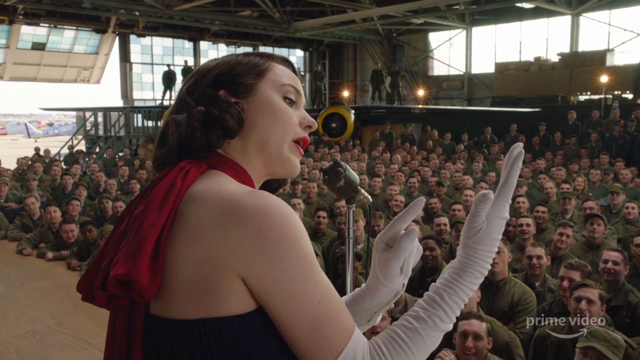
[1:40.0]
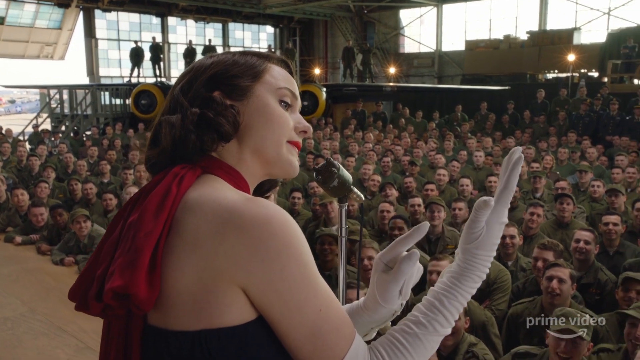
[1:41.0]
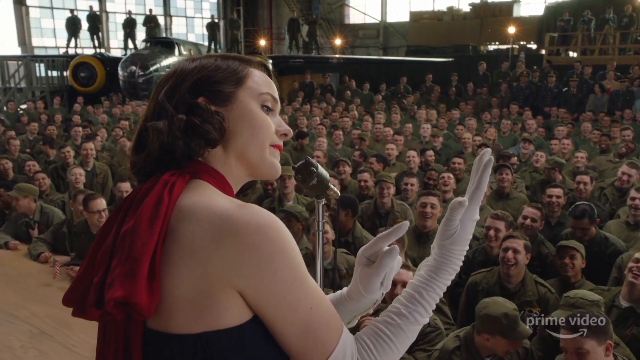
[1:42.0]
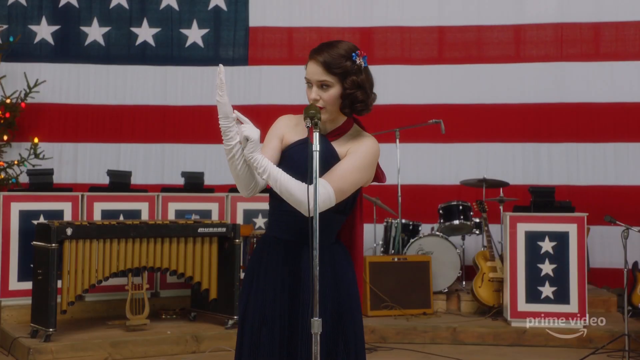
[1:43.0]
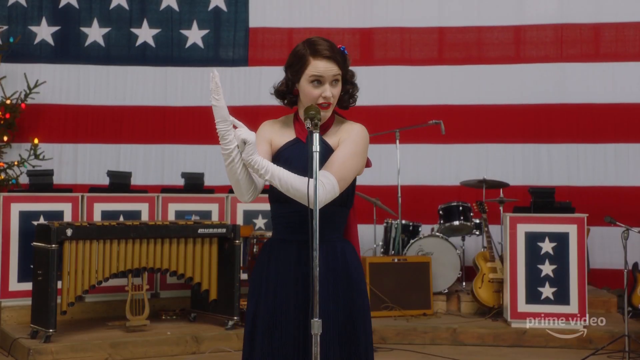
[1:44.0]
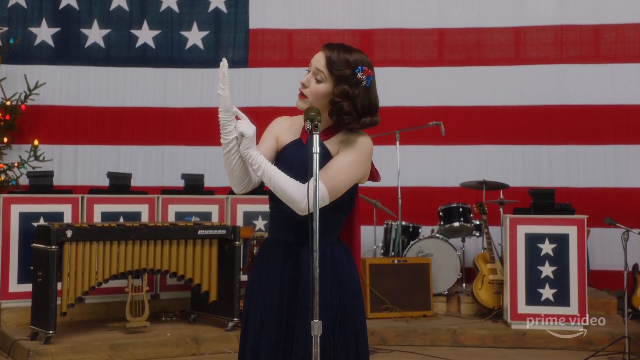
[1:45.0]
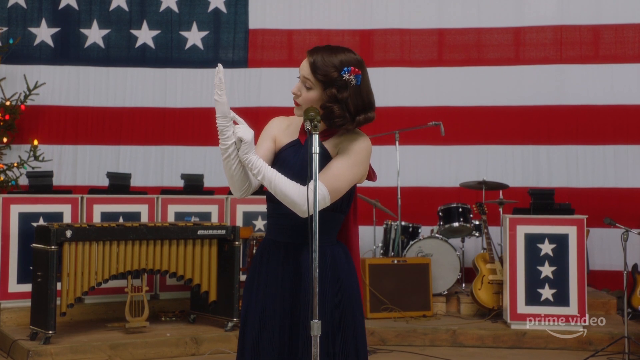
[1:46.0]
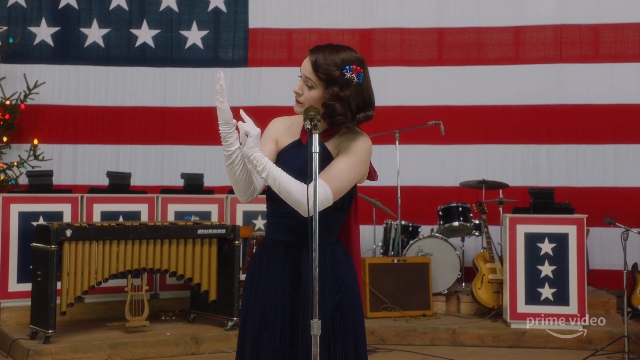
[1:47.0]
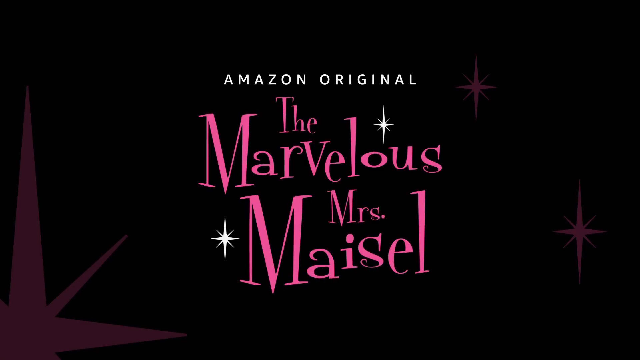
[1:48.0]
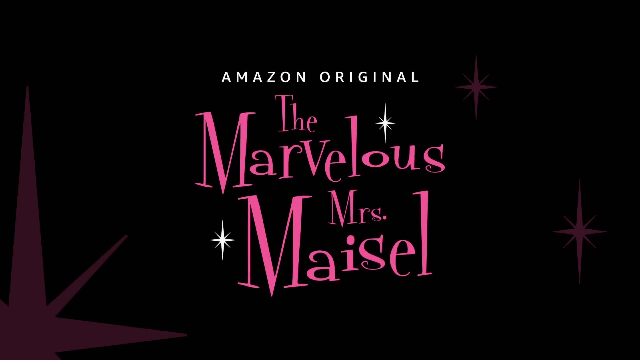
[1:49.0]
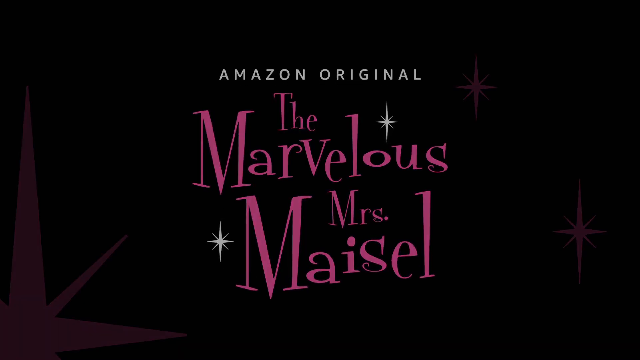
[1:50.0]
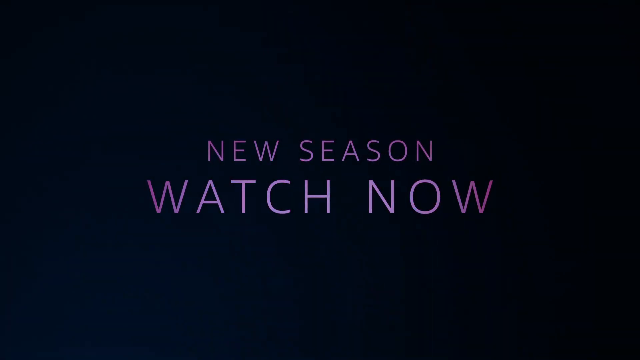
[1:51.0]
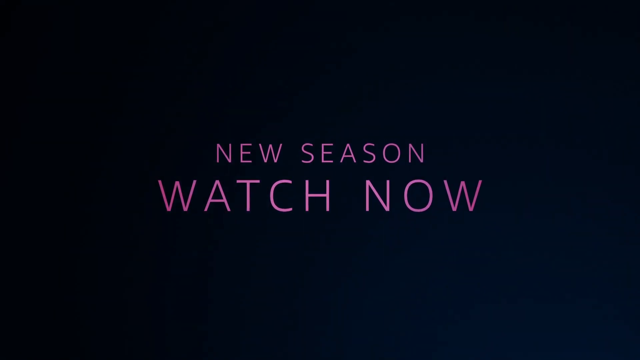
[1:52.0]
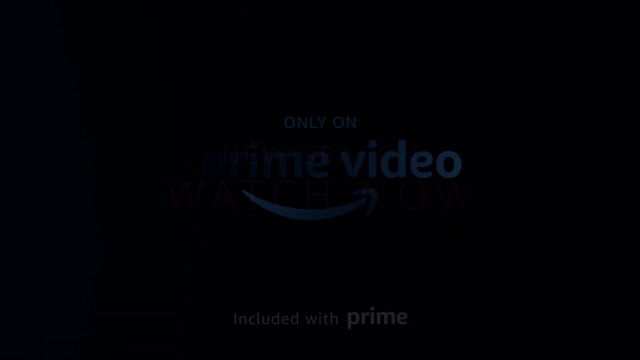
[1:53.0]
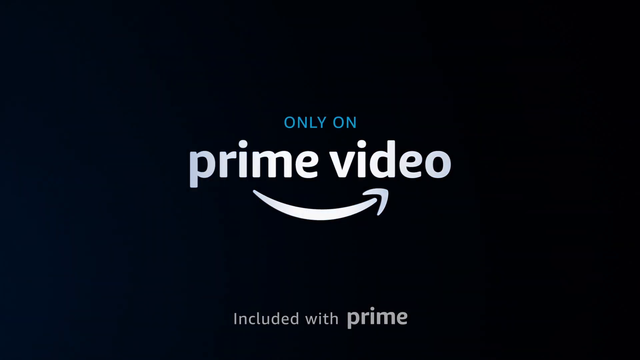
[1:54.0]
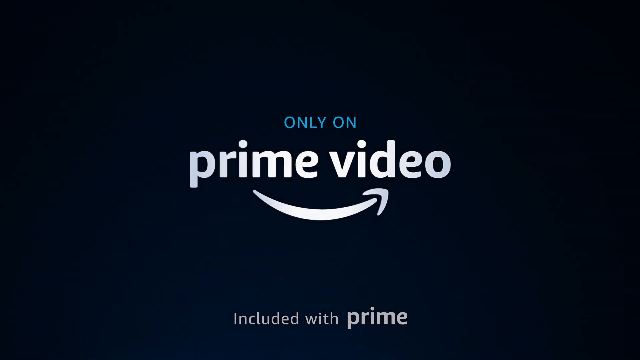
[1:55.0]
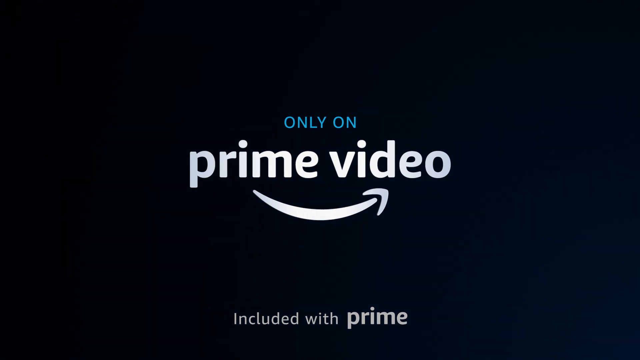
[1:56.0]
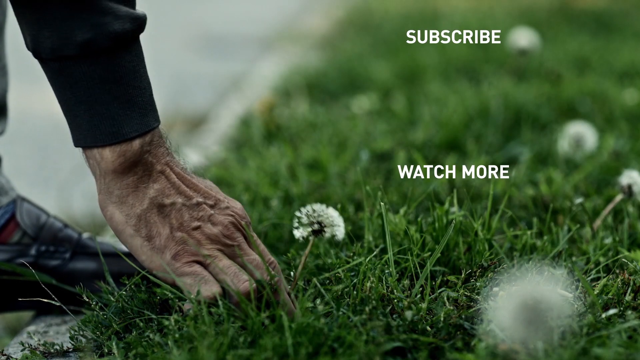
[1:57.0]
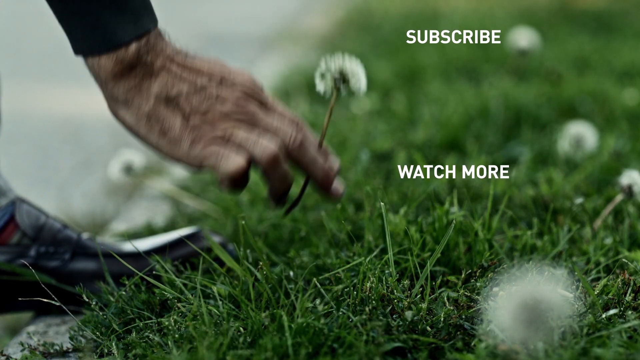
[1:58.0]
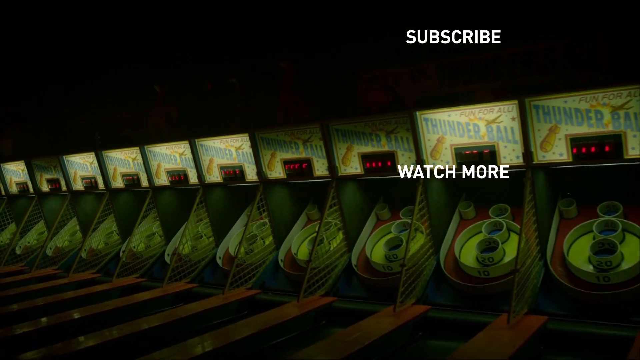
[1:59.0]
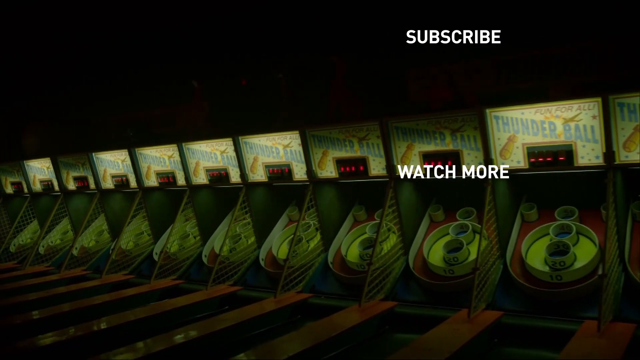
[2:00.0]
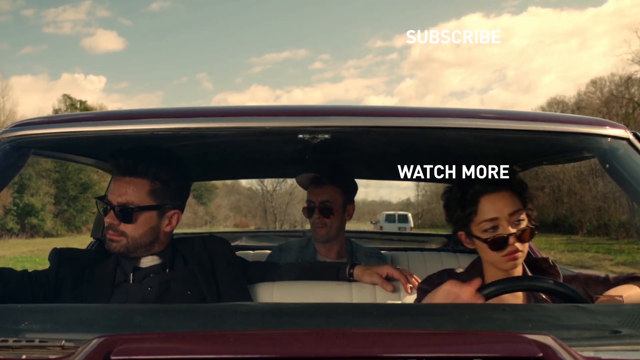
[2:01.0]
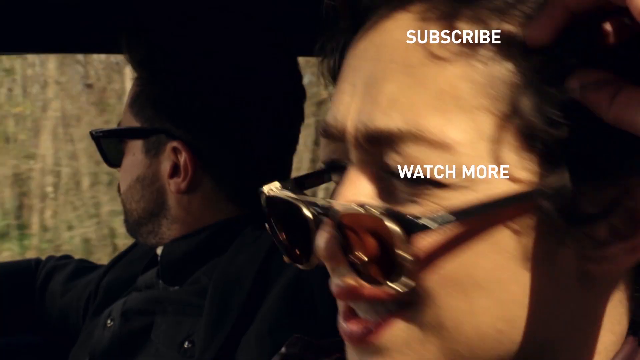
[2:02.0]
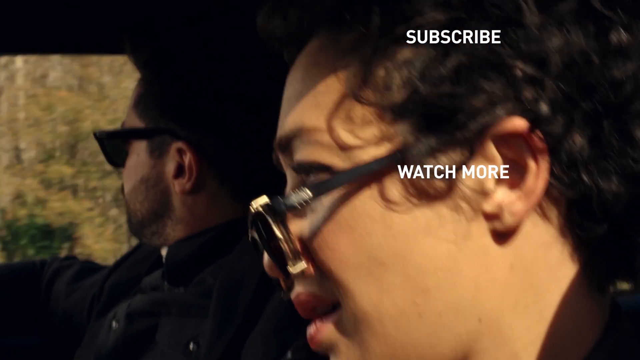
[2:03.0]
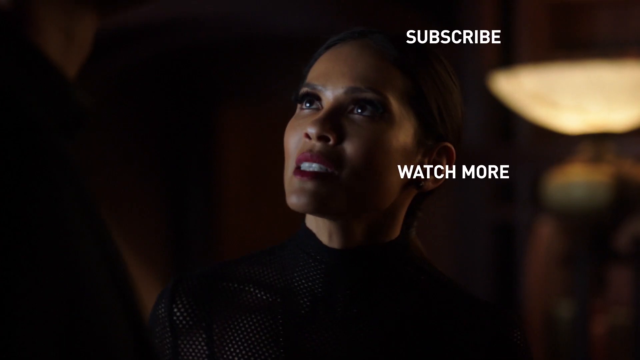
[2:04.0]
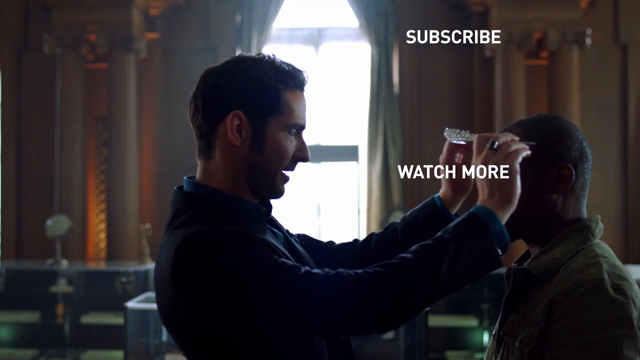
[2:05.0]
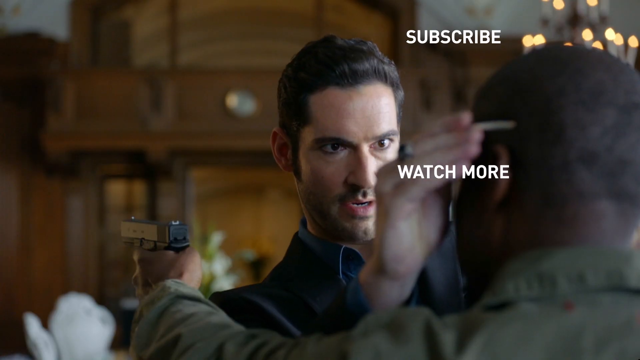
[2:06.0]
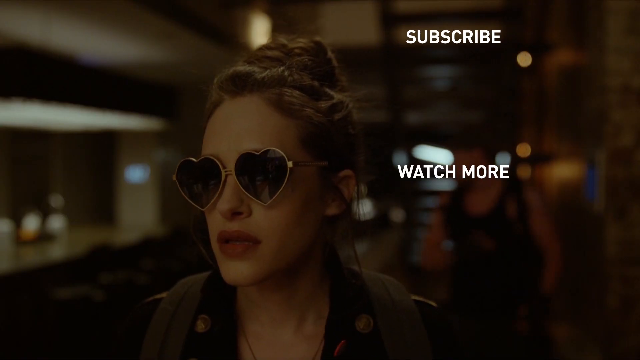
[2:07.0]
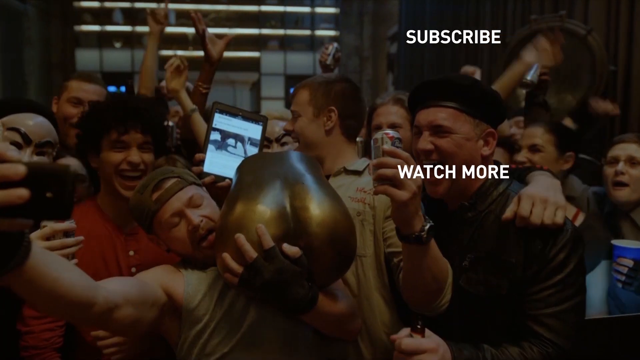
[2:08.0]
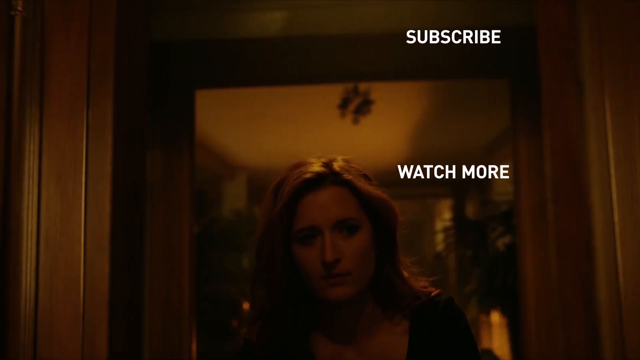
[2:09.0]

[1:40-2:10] The lady performs in front of many soldiers inside a hangar. The engine area of some planes' propellers is painted yellow, and one plane is black or grayish. Light illuminates the stage. The video stays in close-up on the lady as she gestures with her hands, and the men laugh and clap. Then the front of the stage is shown, with musical instruments at the back, including a guitar and a drum. There is something like a stage where judges would sit, with four empty seats. Various soldiers are seated on the stage but do not block the lady as she performs. The big flag and the Christmas tree decorations are still there. At the end, text reads "Amazon Original", "the marvelous Mr. Maisel" and "new season watch now only on prime video", followed by "subscribe and watch more".